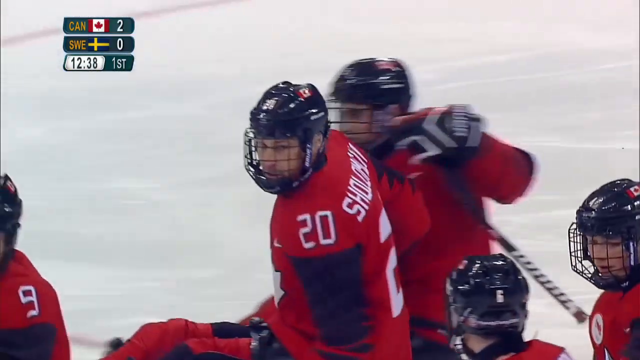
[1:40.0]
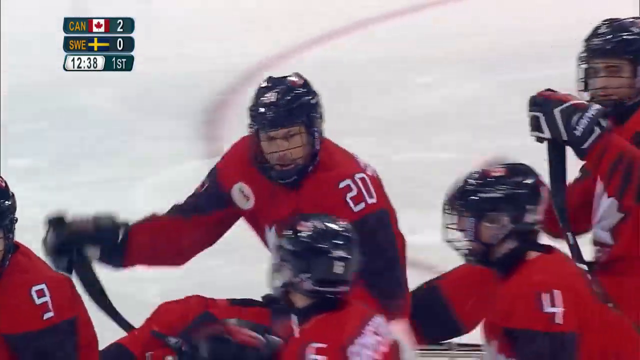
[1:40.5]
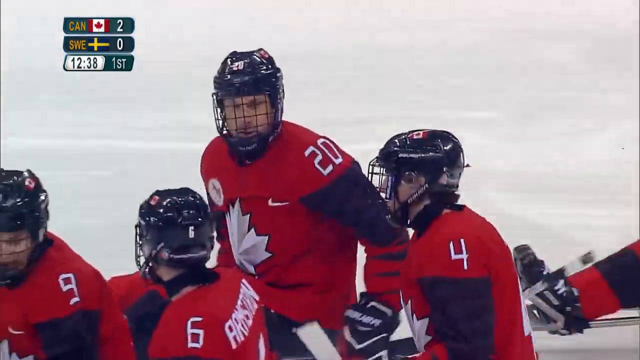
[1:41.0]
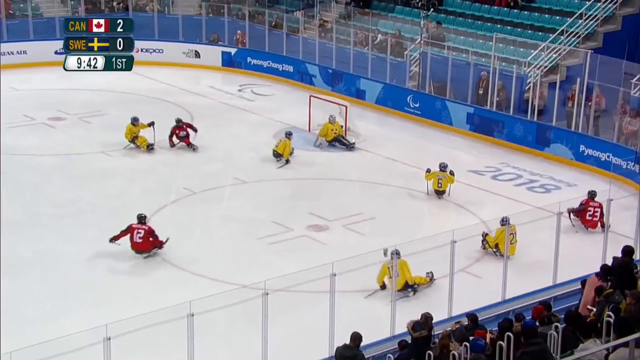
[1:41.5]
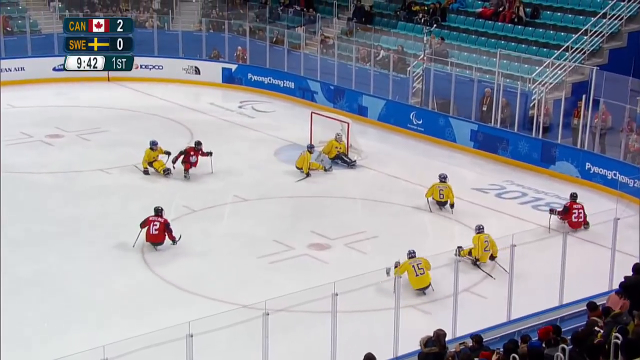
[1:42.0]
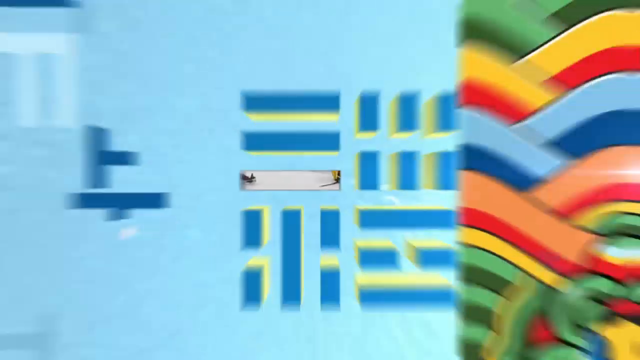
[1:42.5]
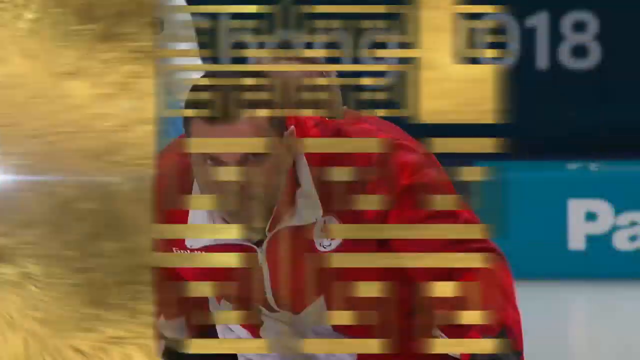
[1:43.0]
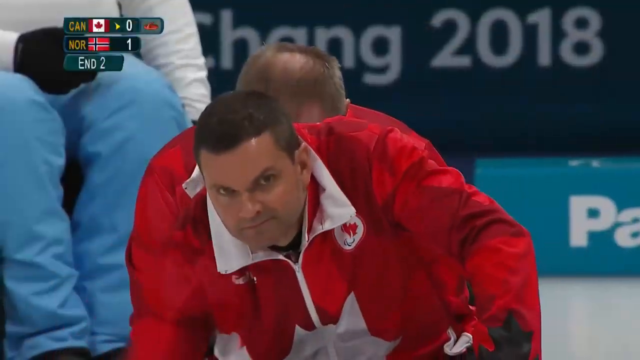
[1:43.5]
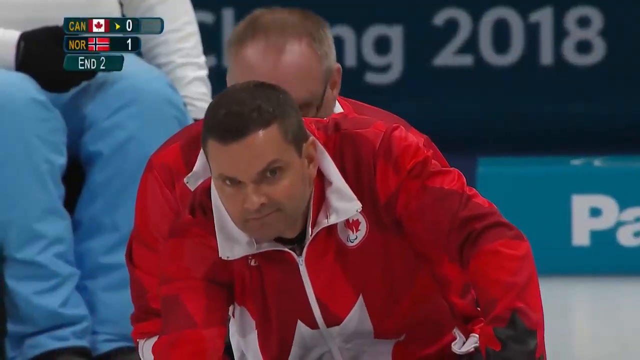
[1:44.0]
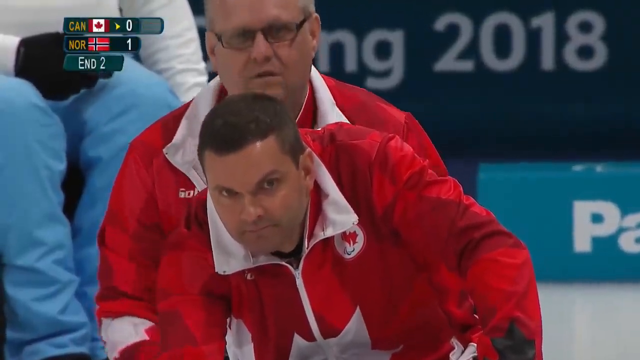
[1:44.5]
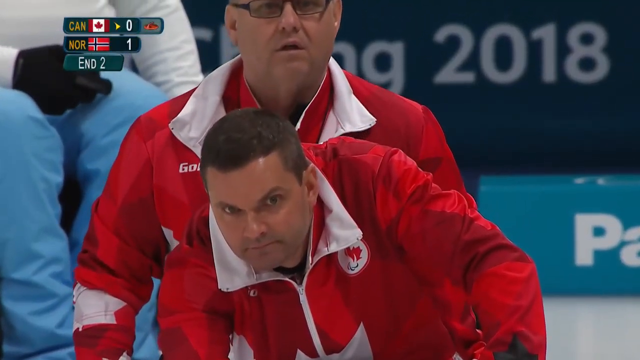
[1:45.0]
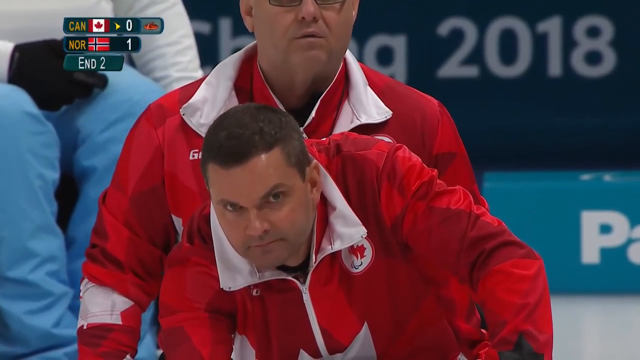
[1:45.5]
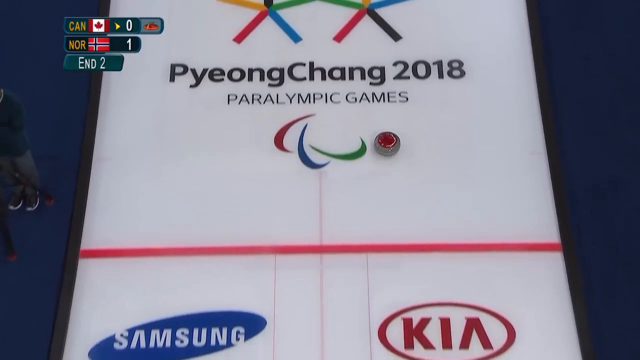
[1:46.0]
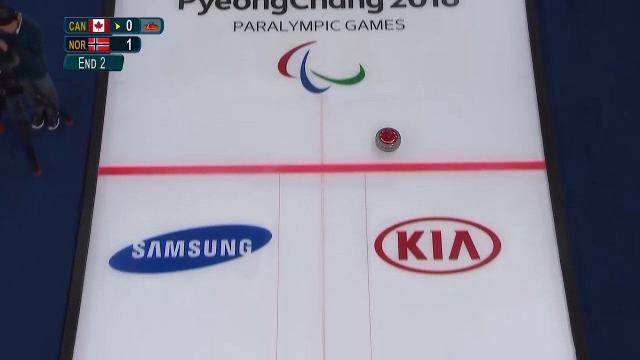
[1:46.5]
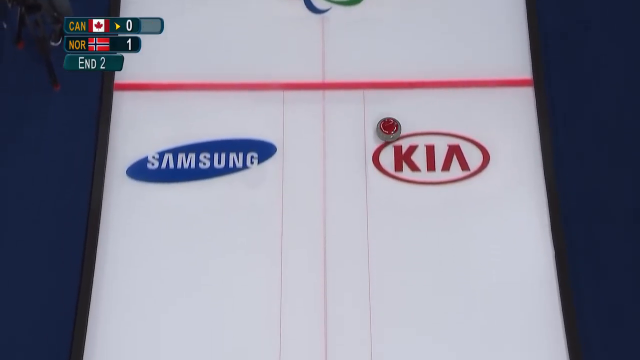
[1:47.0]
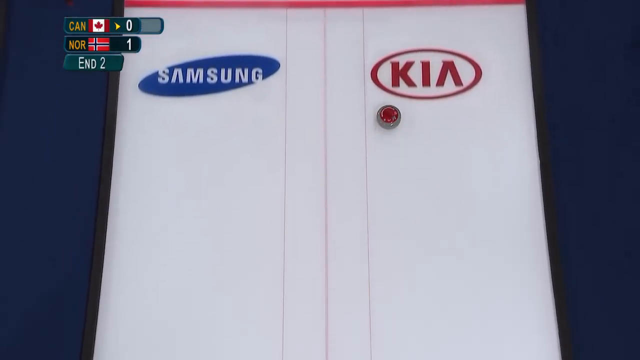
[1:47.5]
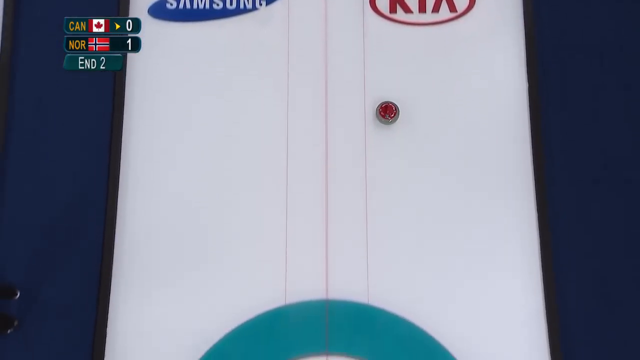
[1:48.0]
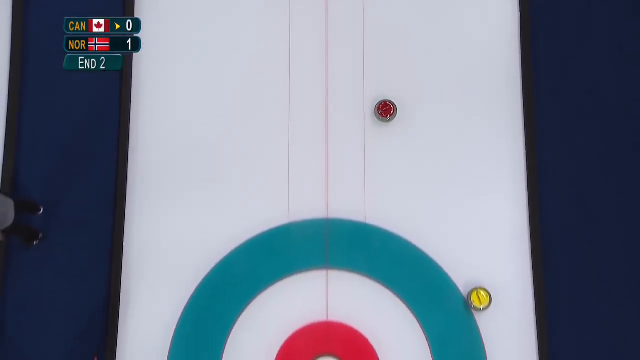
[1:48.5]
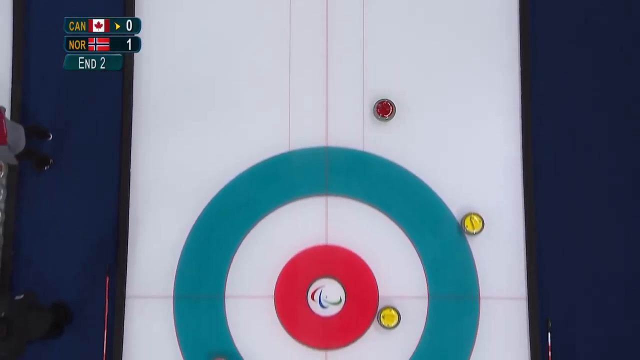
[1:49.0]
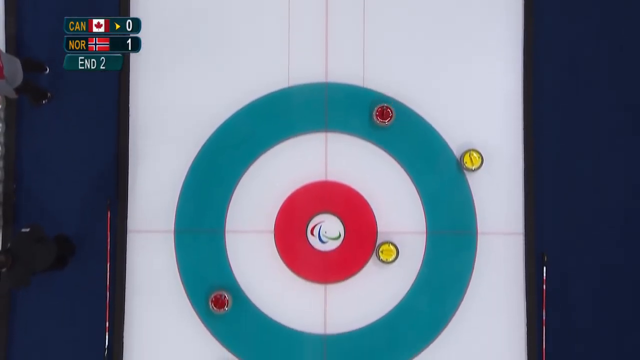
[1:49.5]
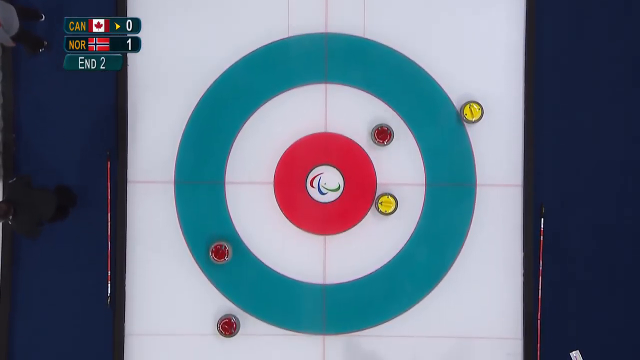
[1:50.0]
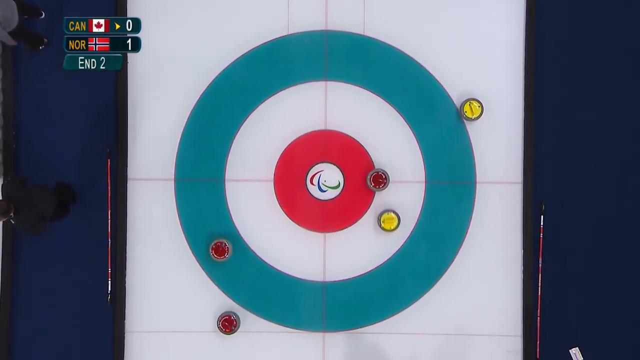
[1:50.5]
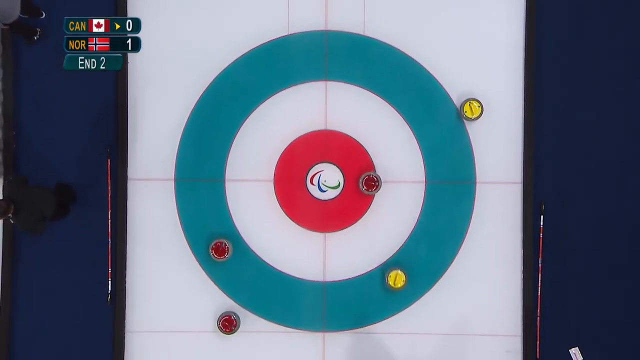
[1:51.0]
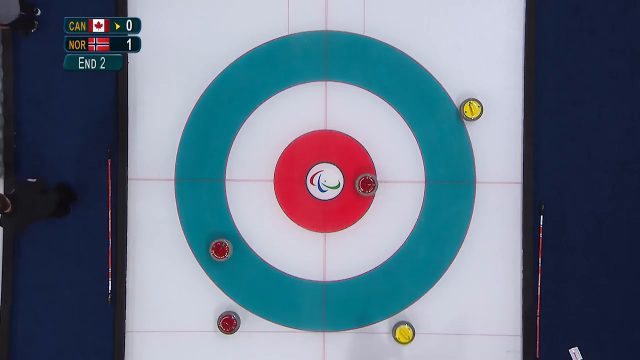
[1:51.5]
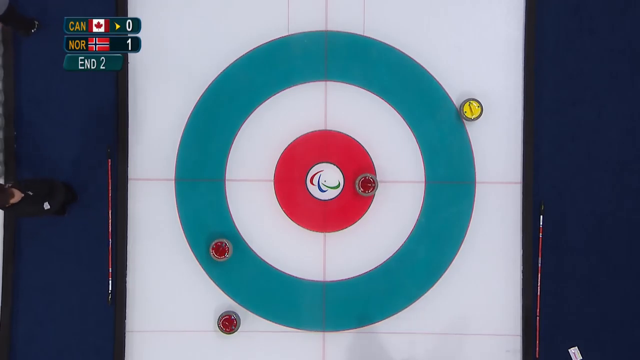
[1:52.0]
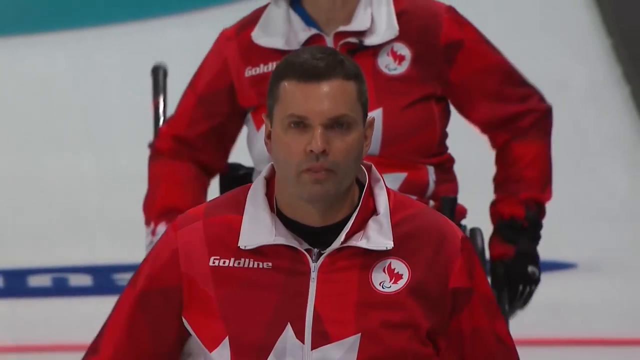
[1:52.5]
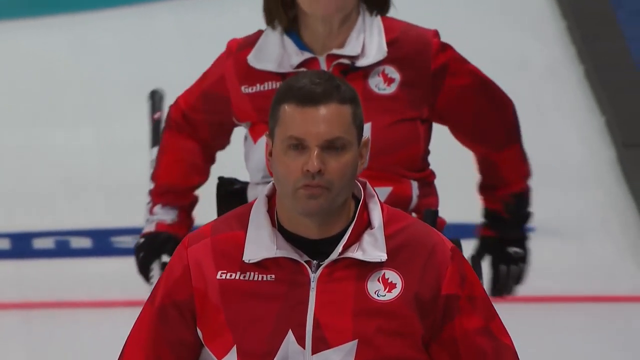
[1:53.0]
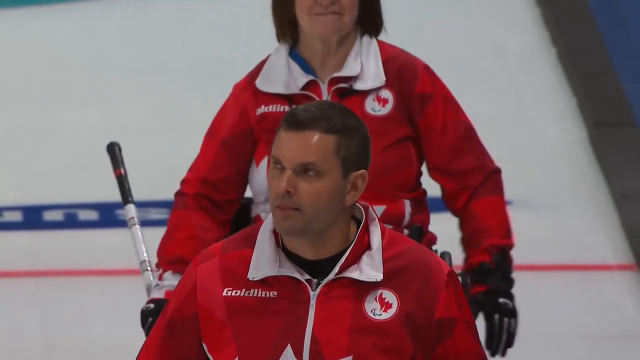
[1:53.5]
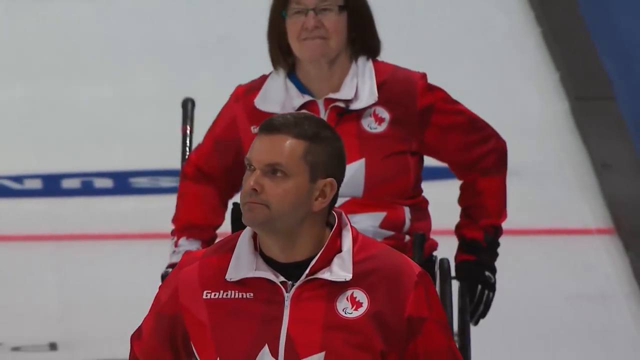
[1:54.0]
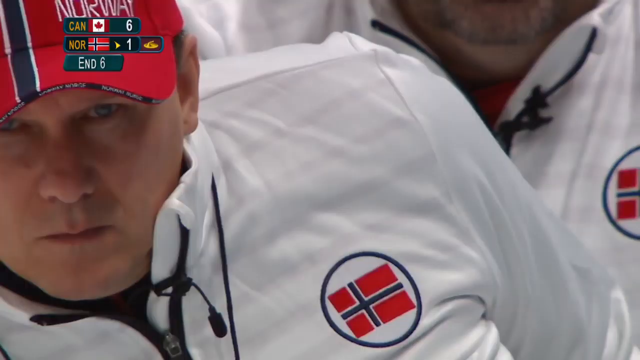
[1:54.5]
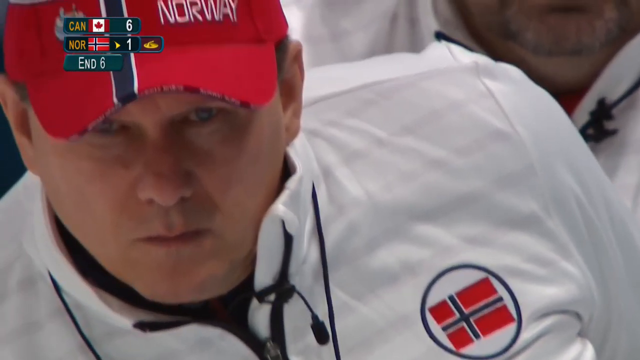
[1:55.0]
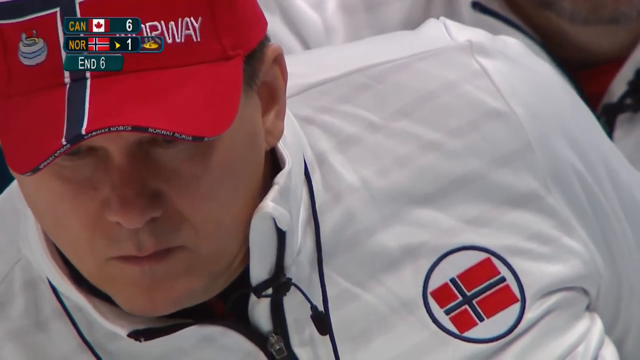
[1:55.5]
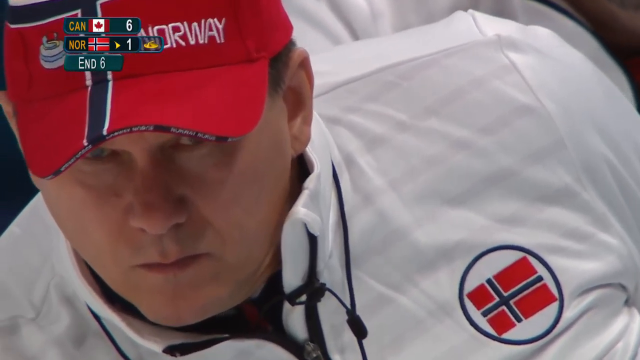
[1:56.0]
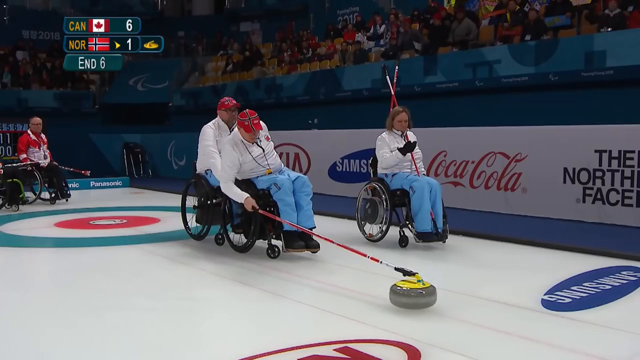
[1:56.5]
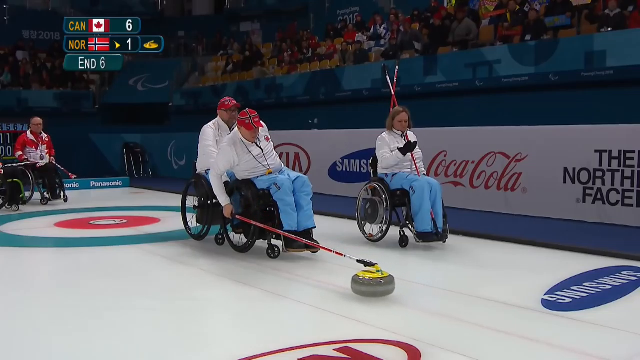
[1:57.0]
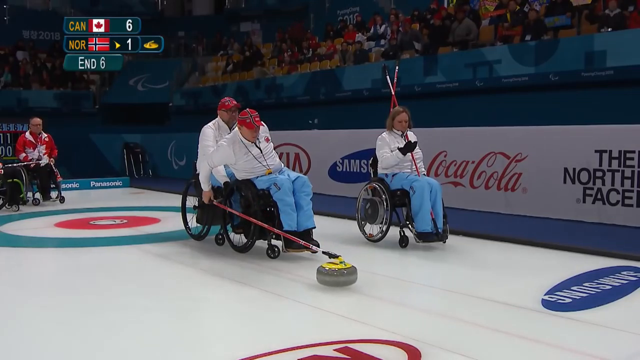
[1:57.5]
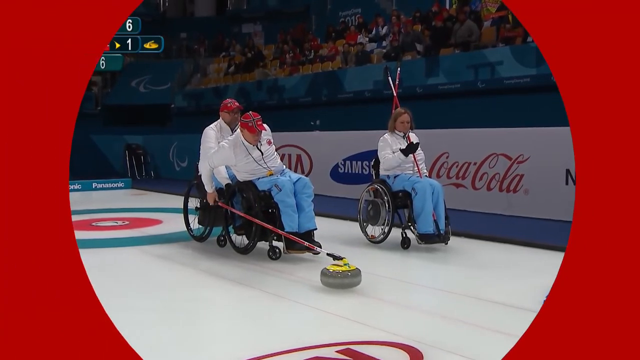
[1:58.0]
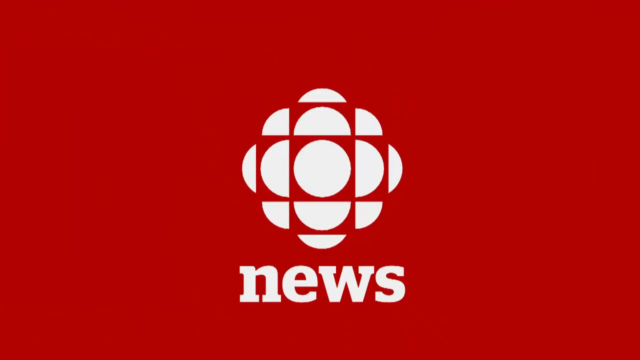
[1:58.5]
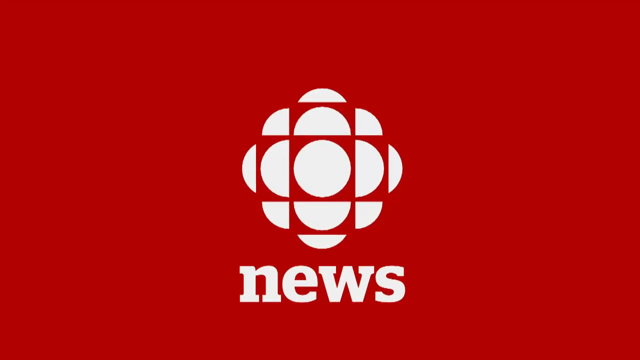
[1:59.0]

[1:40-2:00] Just after Canada's goal against Sweden, a kind of gold transition leads to curling, with Canada versus Norway and a score of Canada 0, Norway 1. The curling rink shows Samsung and Kia as sponsors, Kia in a red circle and Samsung in blue. The Canadian team's curling ball goes into the middle and hits another. The view pans to the team, who are all in wheelchairs and use a kind of adaptive apparatus to push the pucks. The Norwegian team, two men and one woman, are also all in wheelchairs, wearing white jackets and blue pants, and two of the men wear red hats. One of the men is shown just about to push the puck. The video then transitions to a red CBC news screen with the CBC logo and "news" at the bottom.